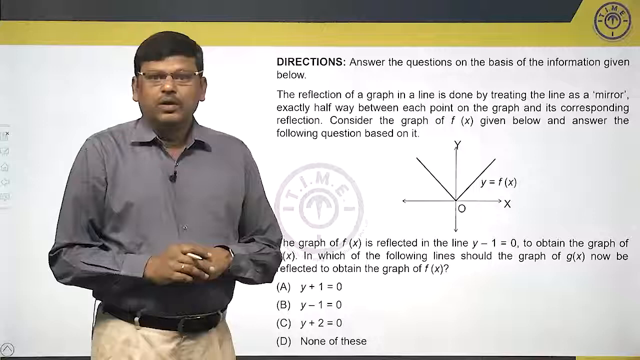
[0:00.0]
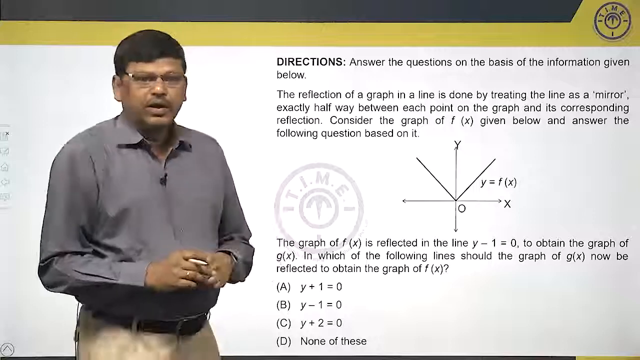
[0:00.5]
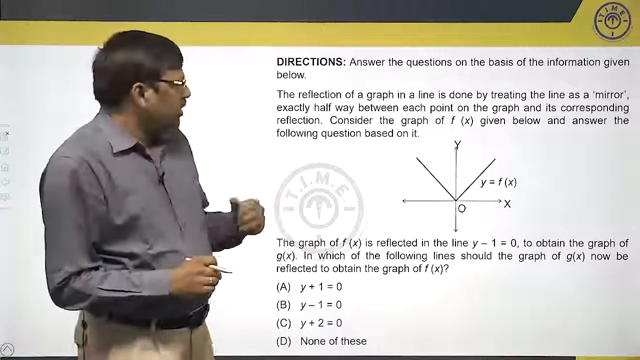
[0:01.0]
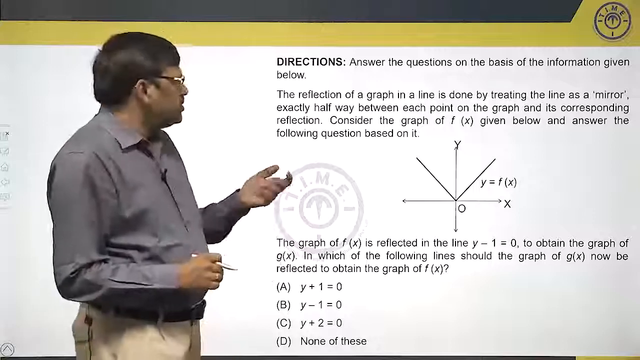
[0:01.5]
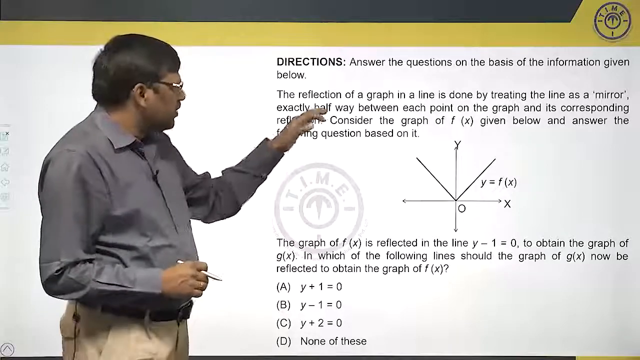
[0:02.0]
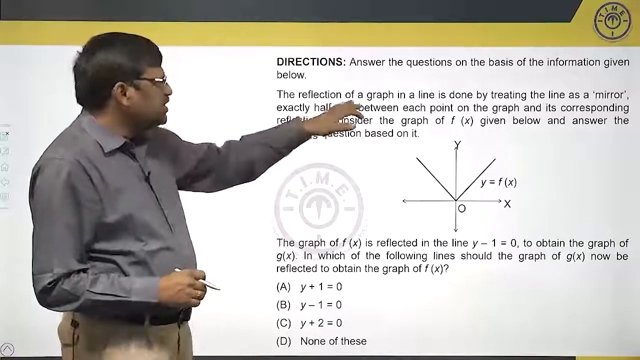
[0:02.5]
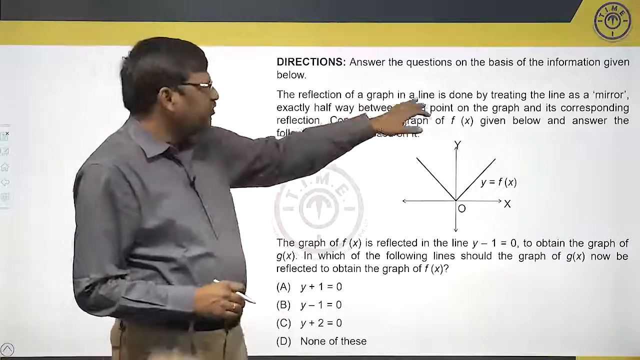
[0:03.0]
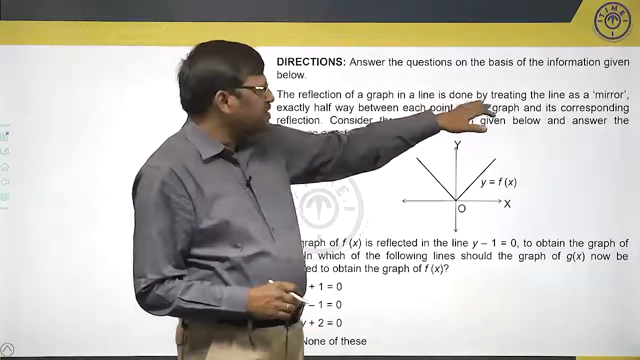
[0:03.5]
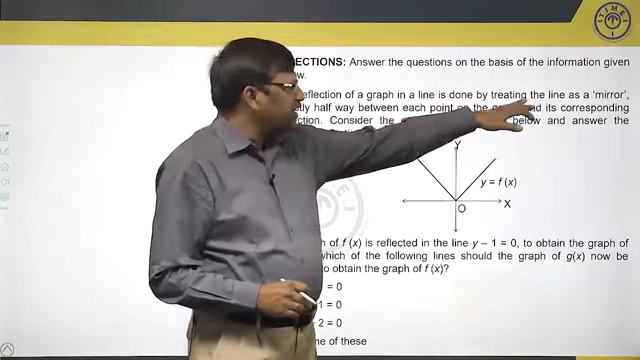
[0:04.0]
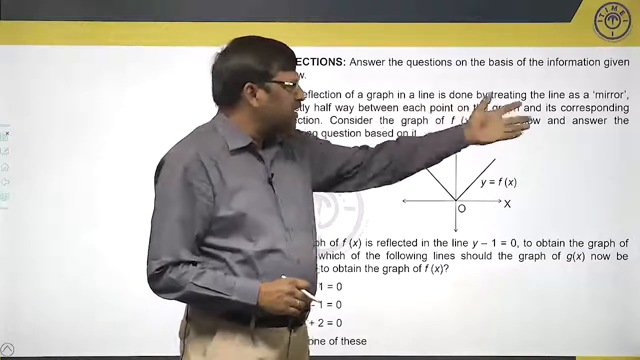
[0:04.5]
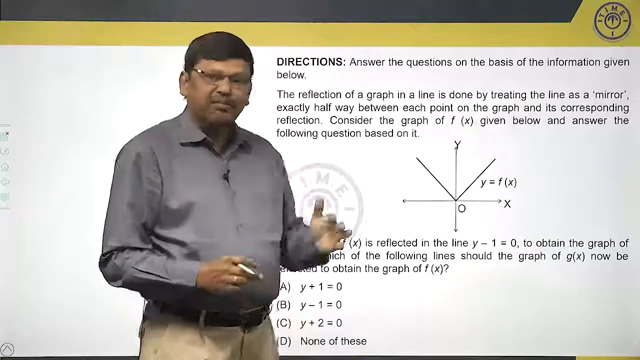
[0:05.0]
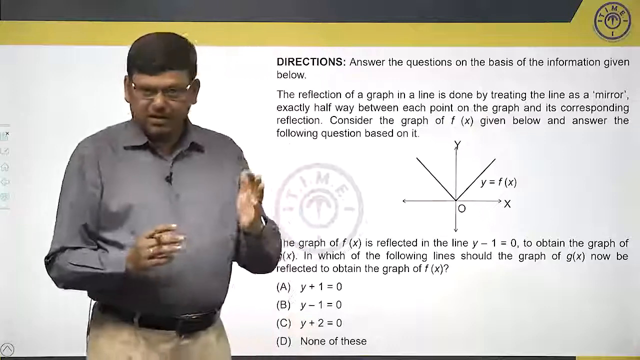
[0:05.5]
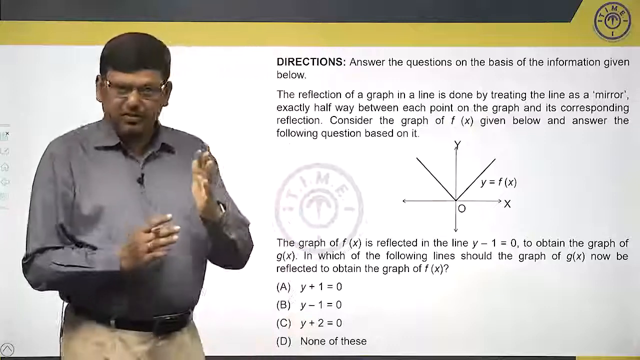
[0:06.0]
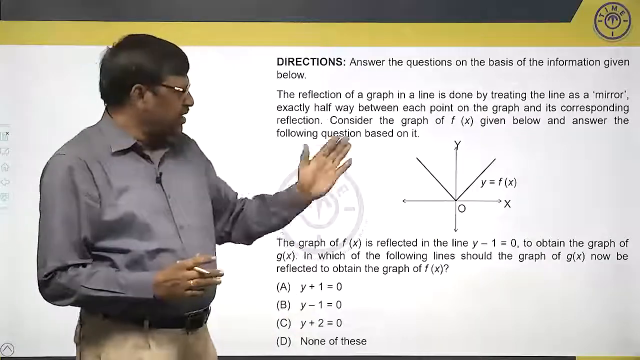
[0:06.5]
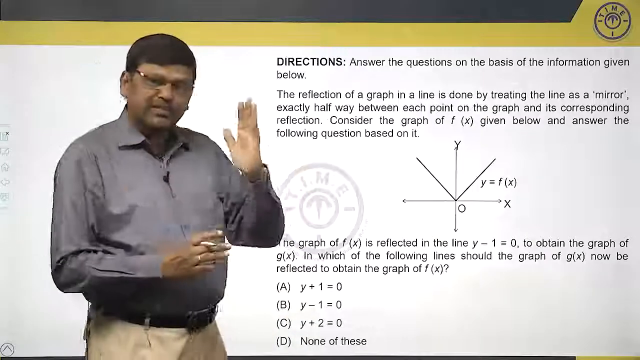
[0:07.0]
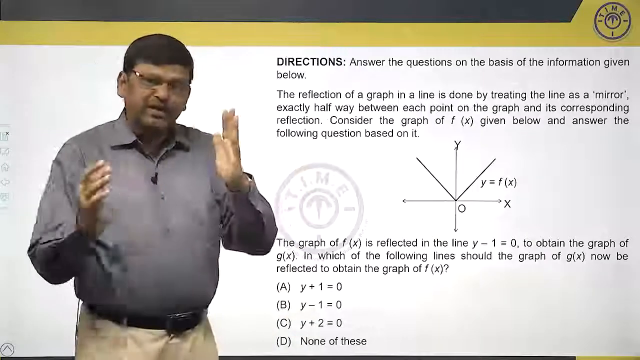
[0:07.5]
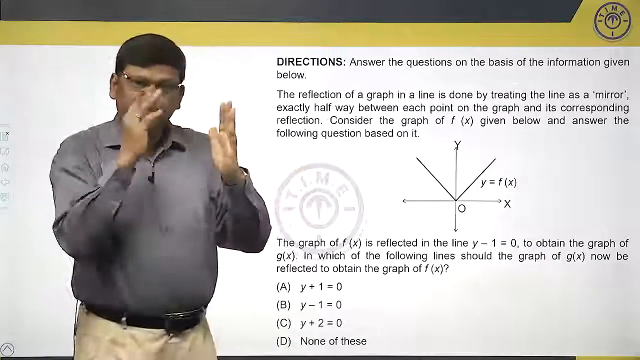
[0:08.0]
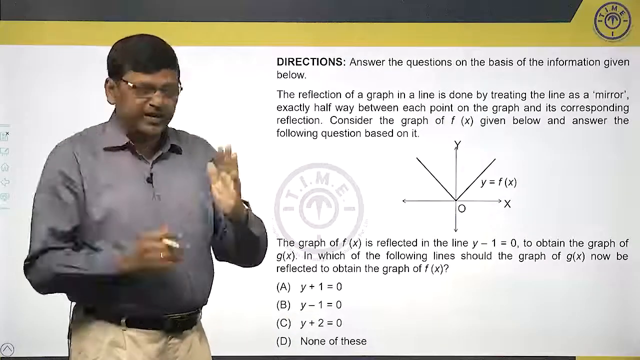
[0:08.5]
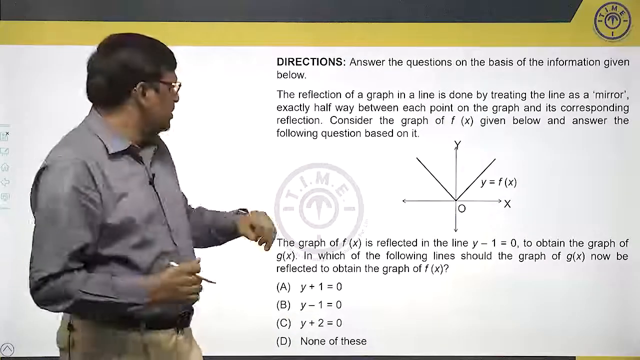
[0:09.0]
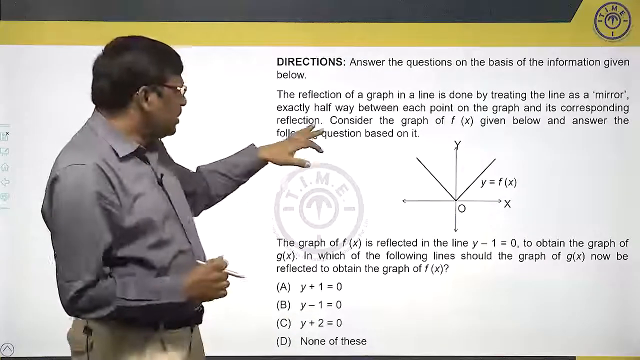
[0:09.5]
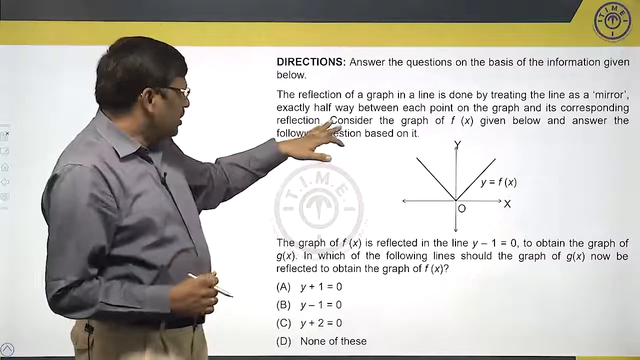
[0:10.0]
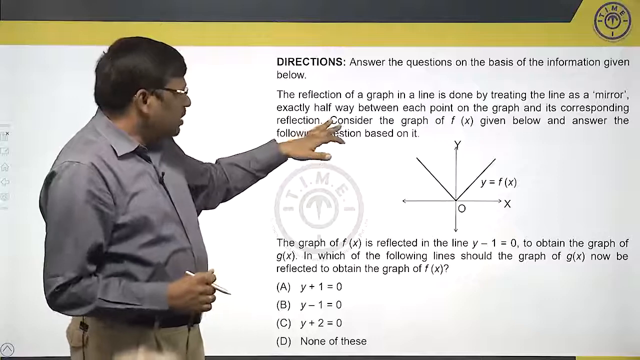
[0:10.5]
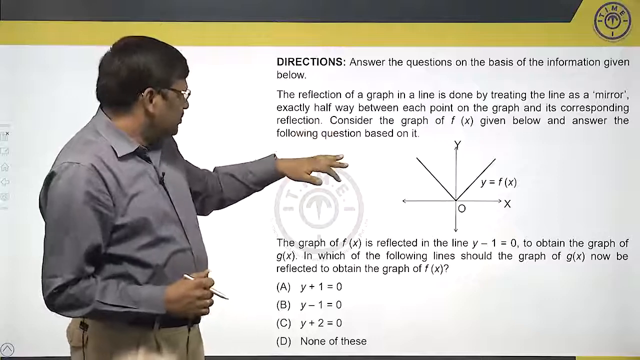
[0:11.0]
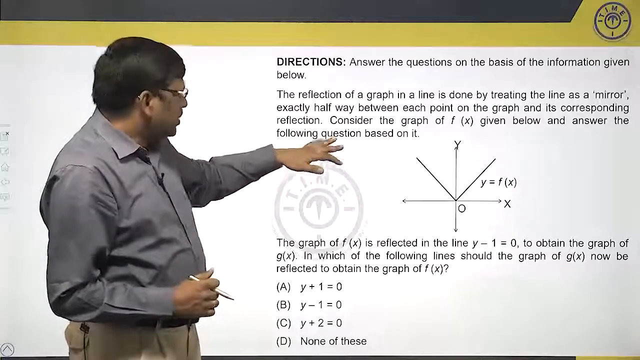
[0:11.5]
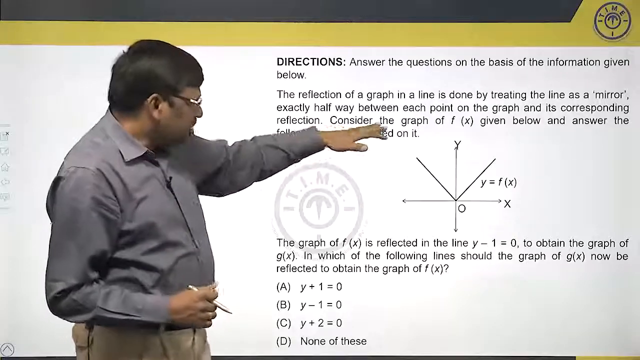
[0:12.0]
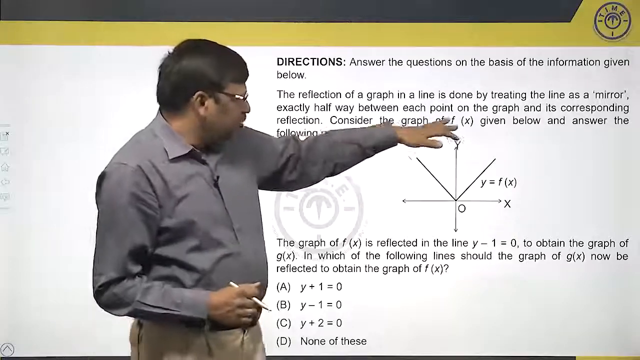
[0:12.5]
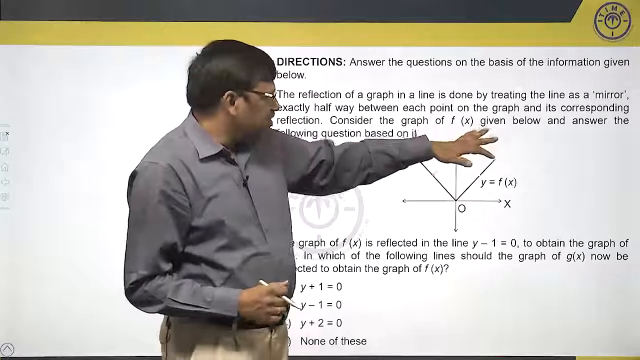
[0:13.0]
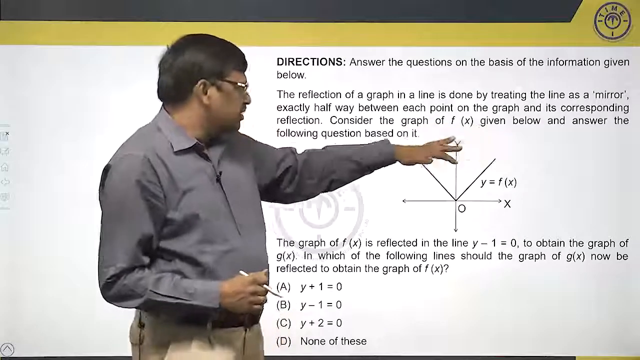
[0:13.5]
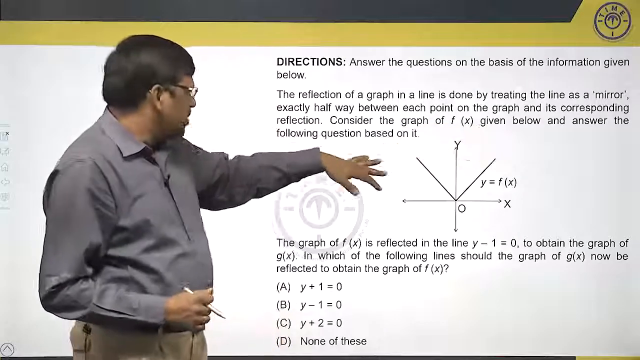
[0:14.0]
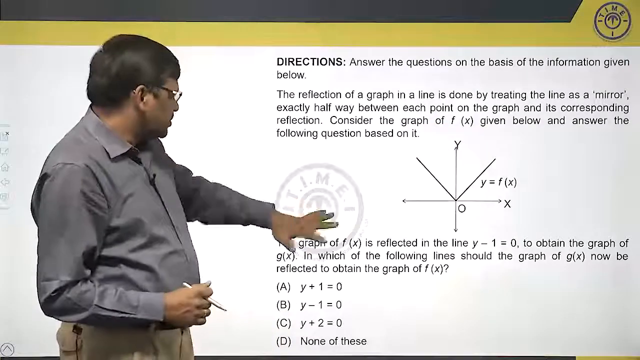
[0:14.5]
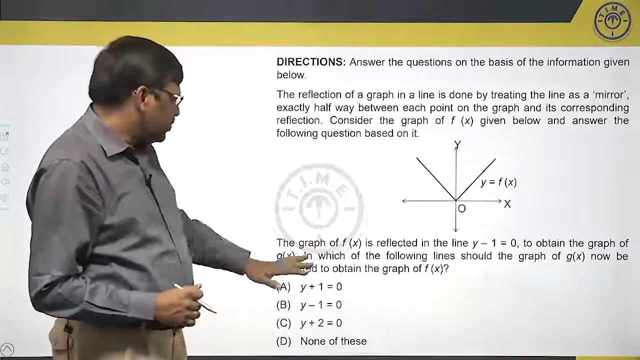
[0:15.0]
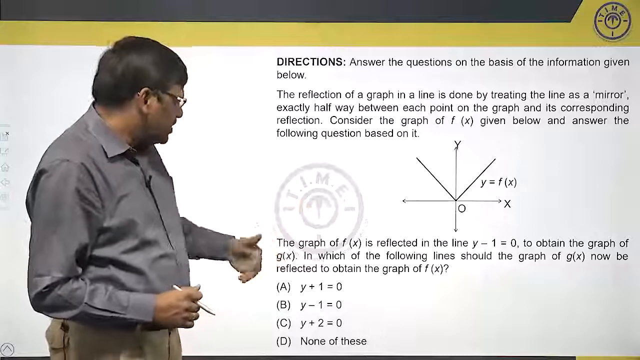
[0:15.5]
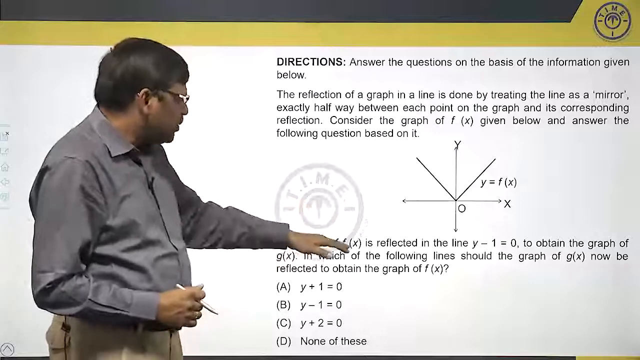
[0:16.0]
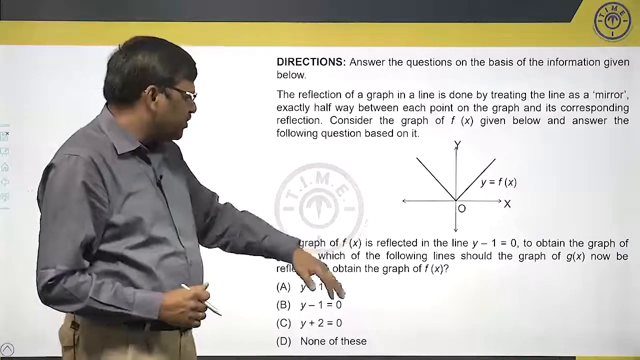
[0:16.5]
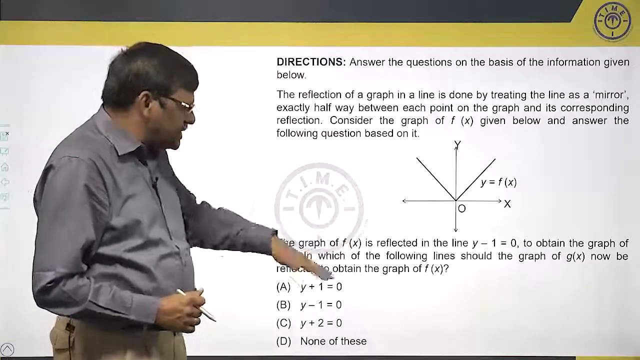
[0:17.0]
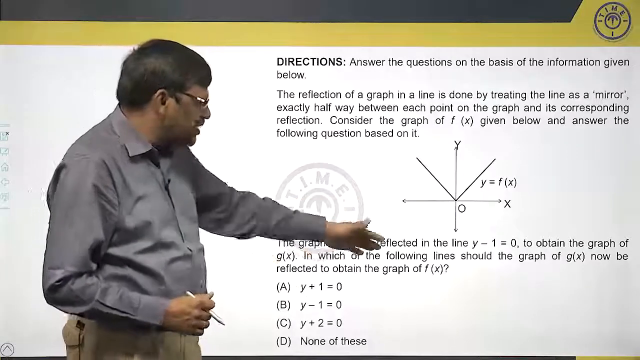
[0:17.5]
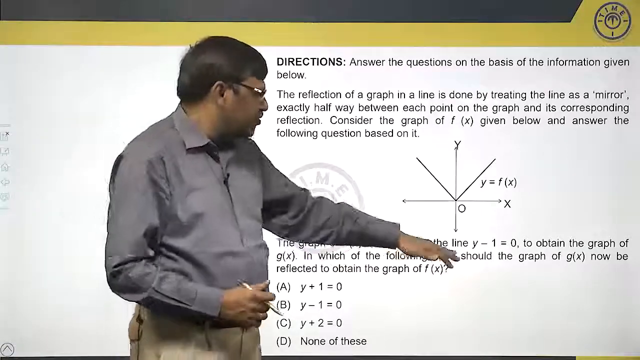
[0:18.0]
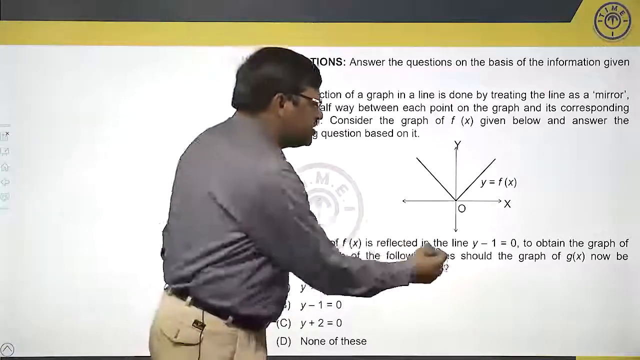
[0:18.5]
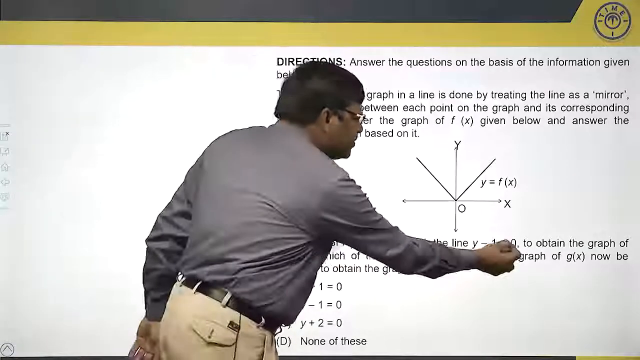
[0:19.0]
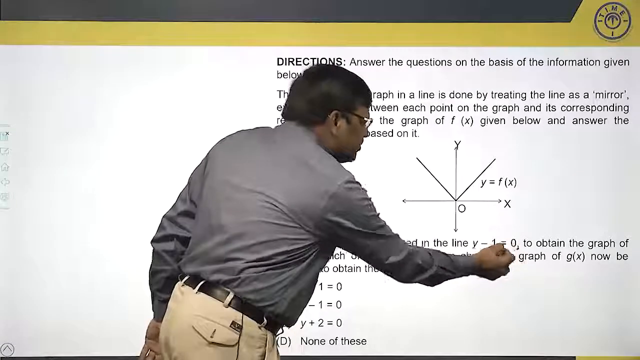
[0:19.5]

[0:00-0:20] An Indian man wearing a grey button-up shirt is on the left-hand side of the frame, and the green screen background shows a math question. It reads: "directions, answer the question on the basis of the information given below. The reflection of a graph in a line is done by treating the line as a mirror. Exactly halfway between each point on the graph is its corresponding reflection. Consider the graph of fx given below and answer the following question based on it. The graph of fx is reflected in the line y-1 equals 0 to obtain the graph of gx. In which of the following lines should the graph of gx now be reflected to obtain the graph of fx?" Holding a pen in his right hand, the man makes vertical motions with his left hand and darting motions with his right hand. He then points toward a portion of the question with his right hand, using his pinky and ring finger, gestures toward the question stem, and circles the line y-1 equals 0 with the pen, which leaves a black circle mark on the screen.